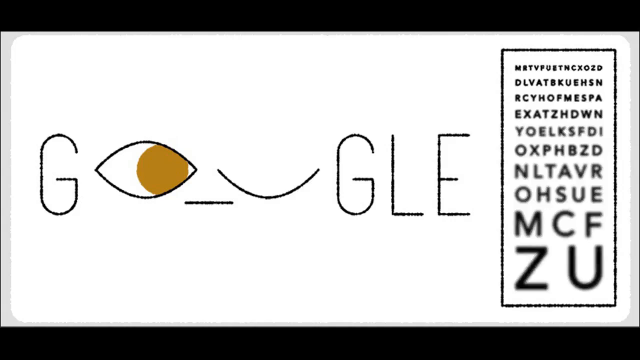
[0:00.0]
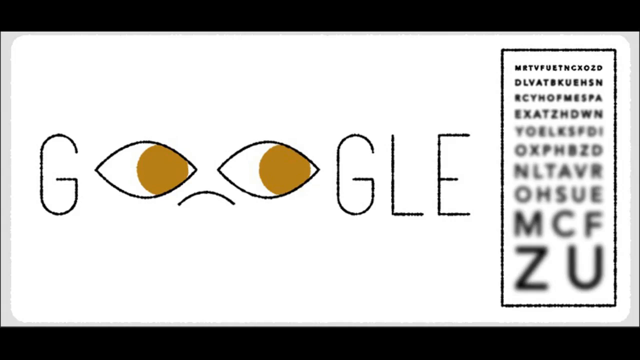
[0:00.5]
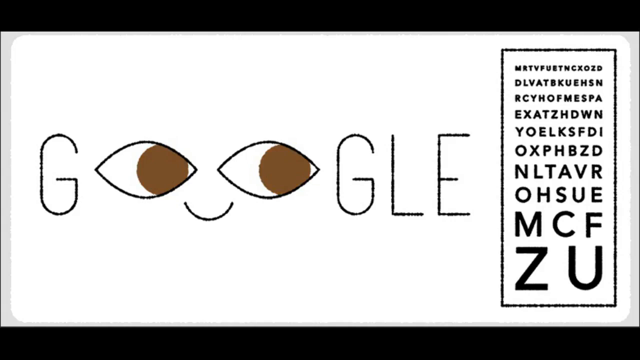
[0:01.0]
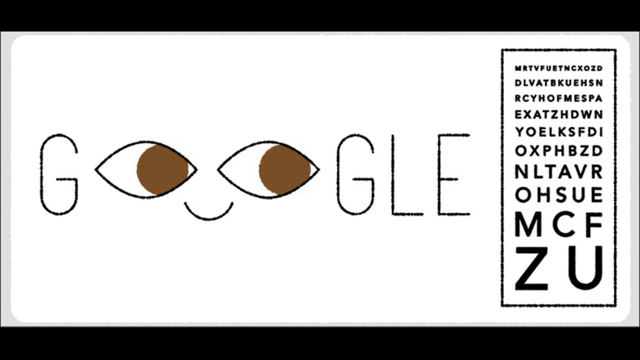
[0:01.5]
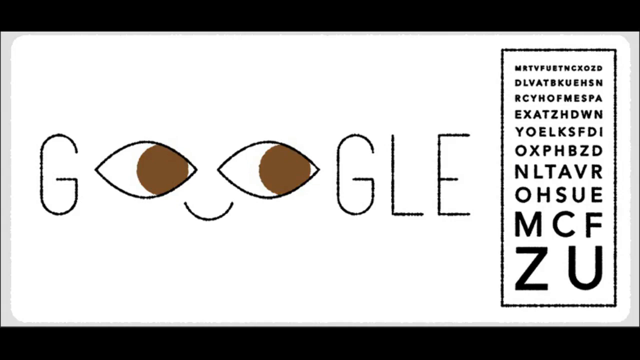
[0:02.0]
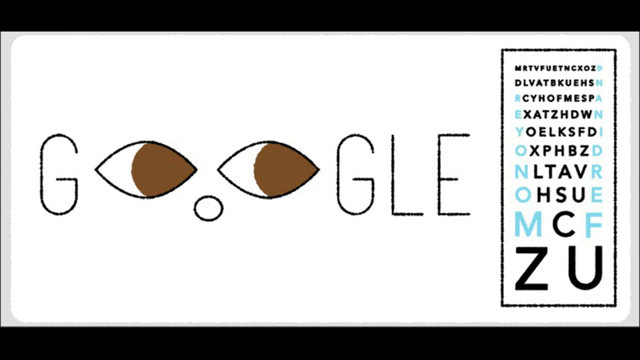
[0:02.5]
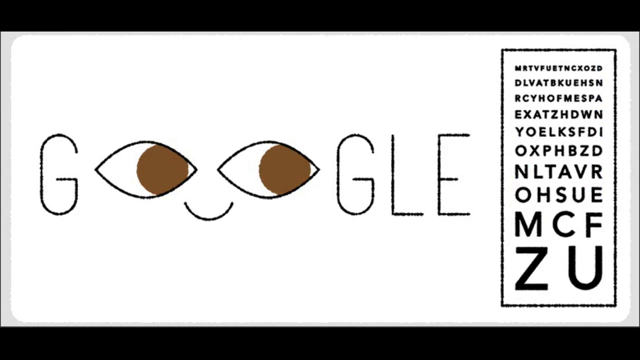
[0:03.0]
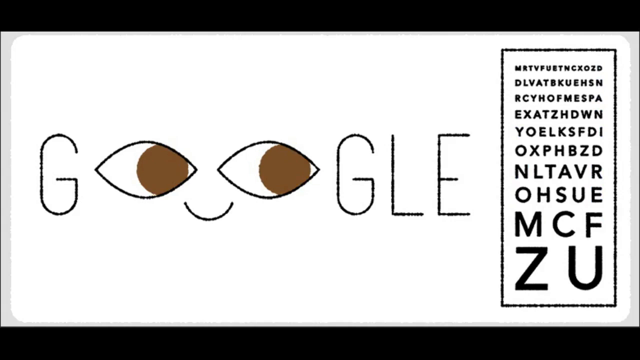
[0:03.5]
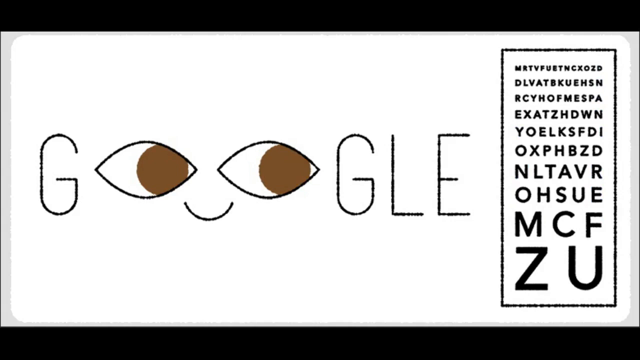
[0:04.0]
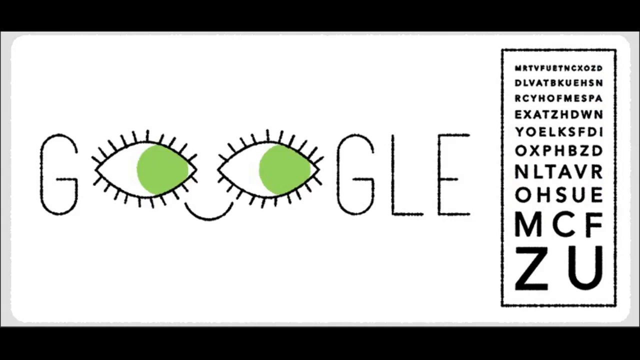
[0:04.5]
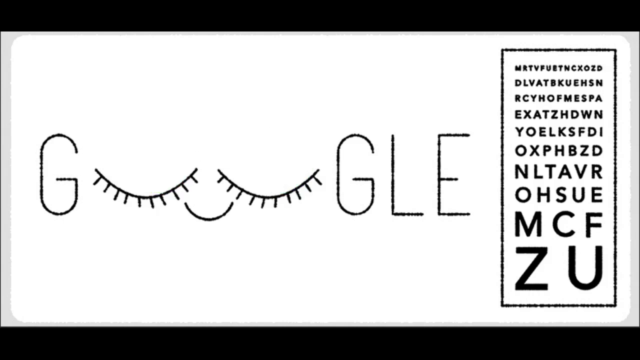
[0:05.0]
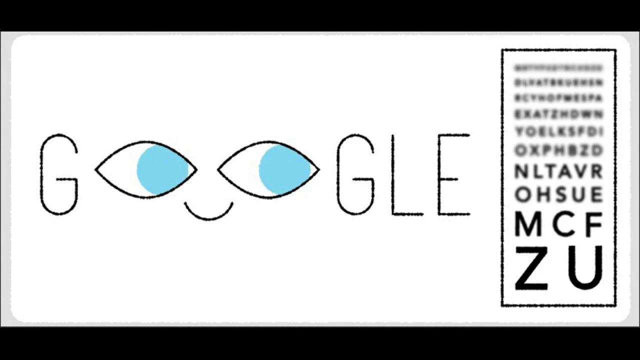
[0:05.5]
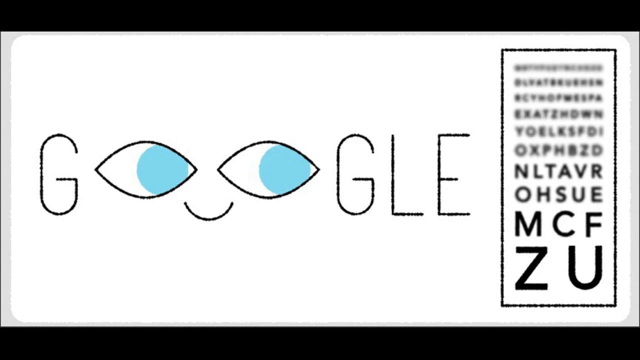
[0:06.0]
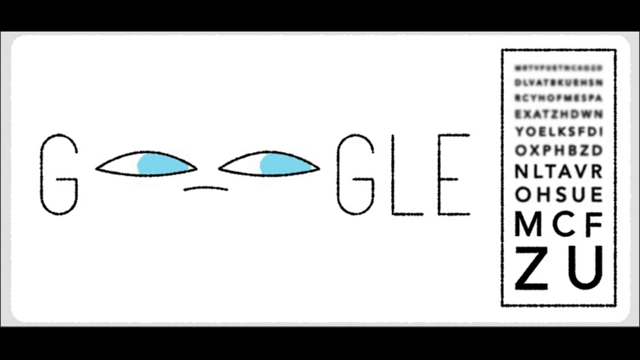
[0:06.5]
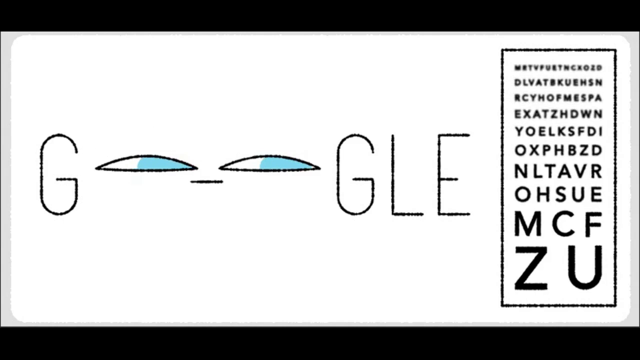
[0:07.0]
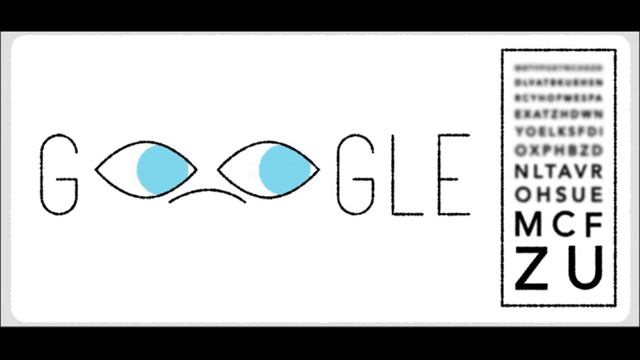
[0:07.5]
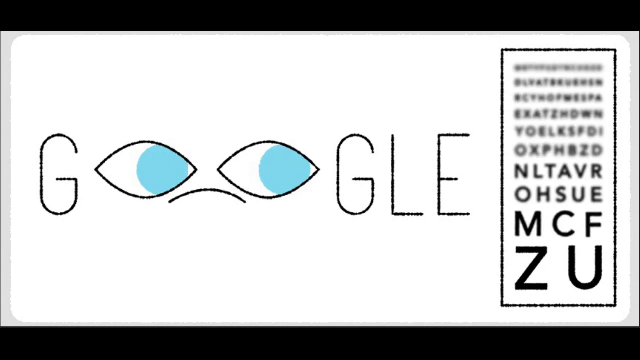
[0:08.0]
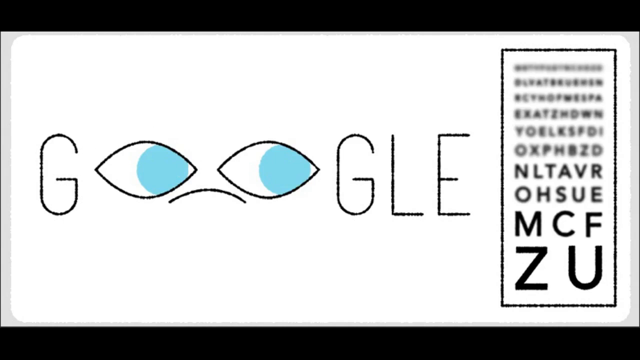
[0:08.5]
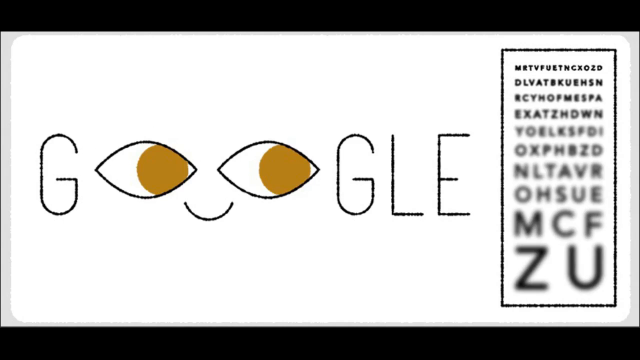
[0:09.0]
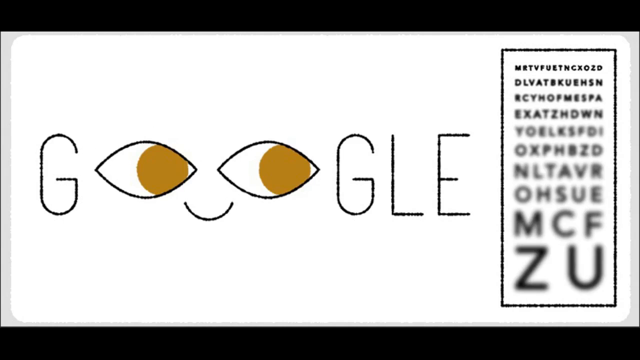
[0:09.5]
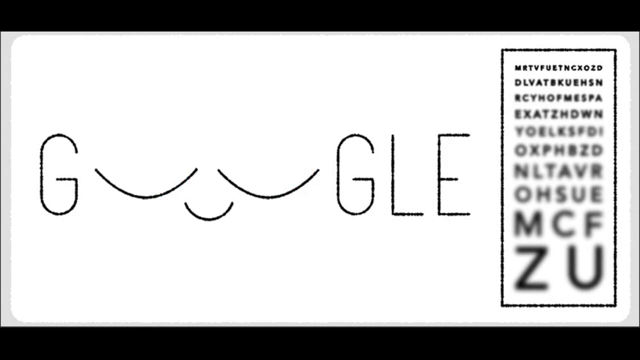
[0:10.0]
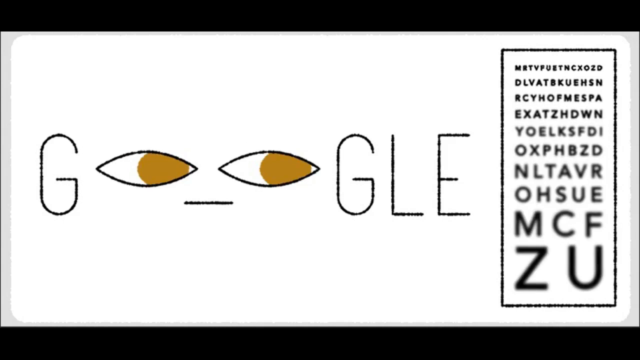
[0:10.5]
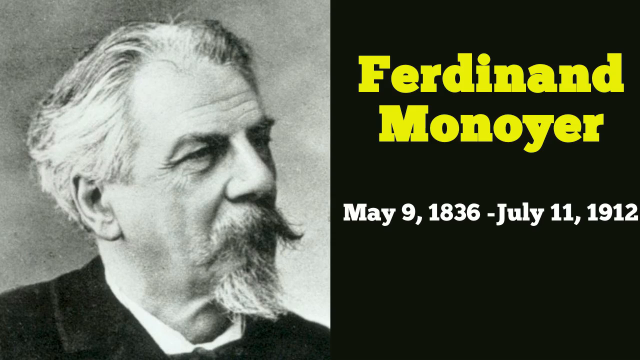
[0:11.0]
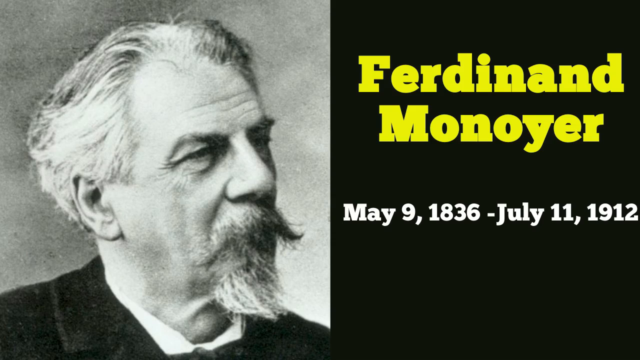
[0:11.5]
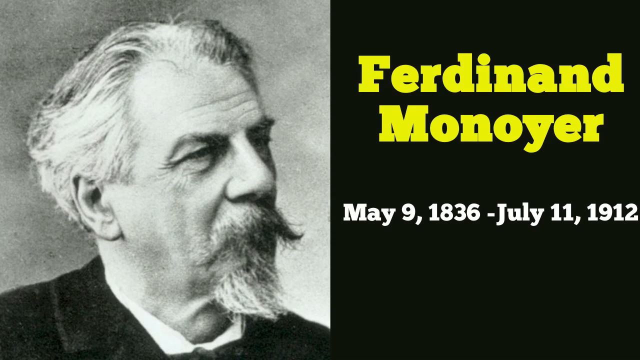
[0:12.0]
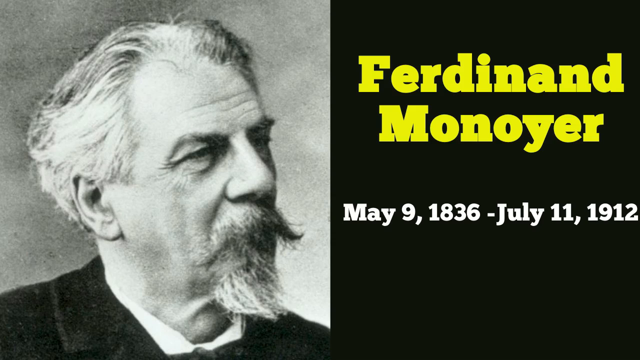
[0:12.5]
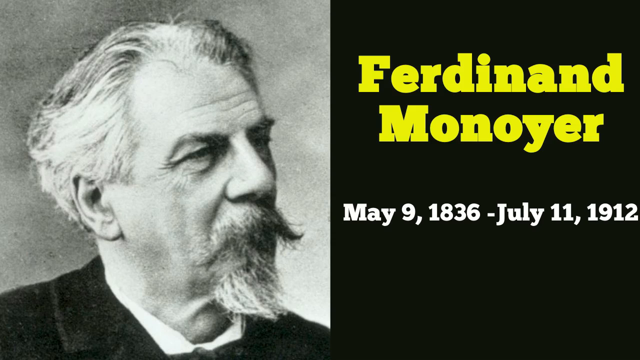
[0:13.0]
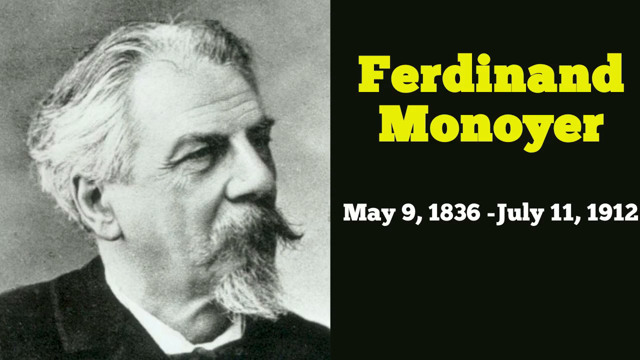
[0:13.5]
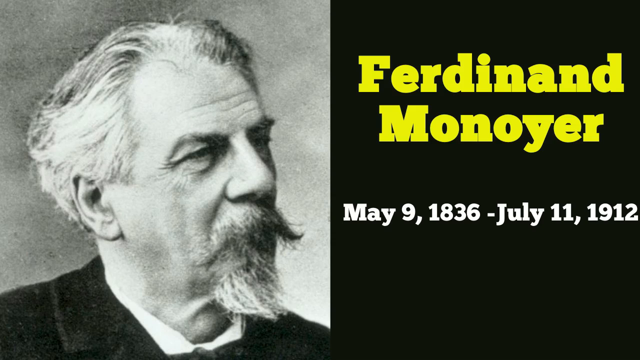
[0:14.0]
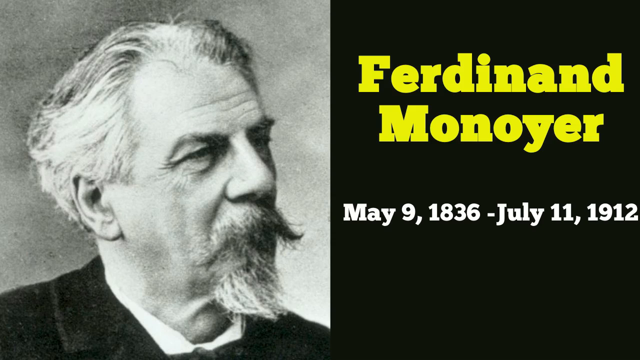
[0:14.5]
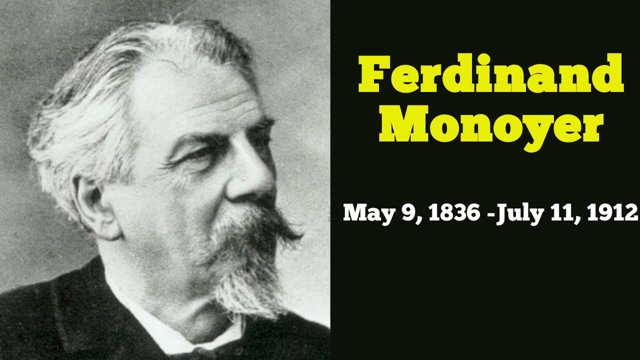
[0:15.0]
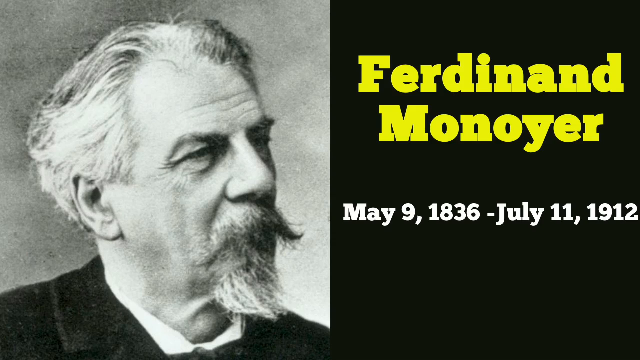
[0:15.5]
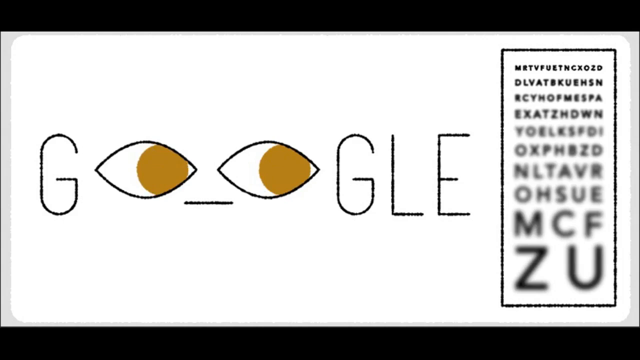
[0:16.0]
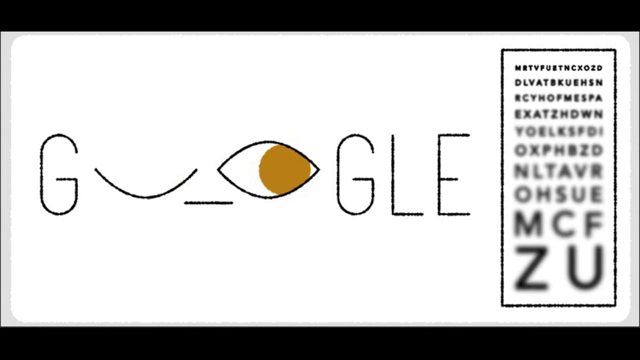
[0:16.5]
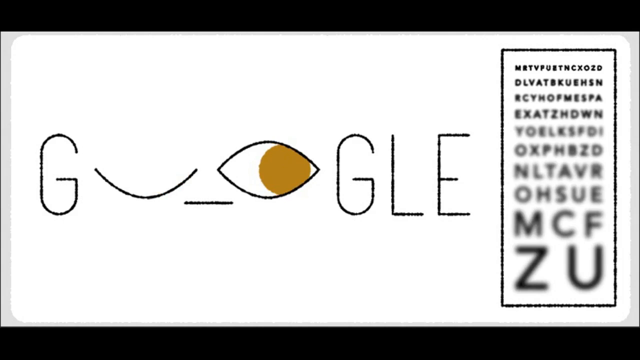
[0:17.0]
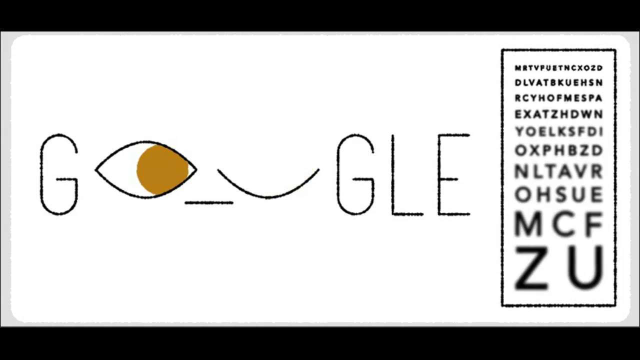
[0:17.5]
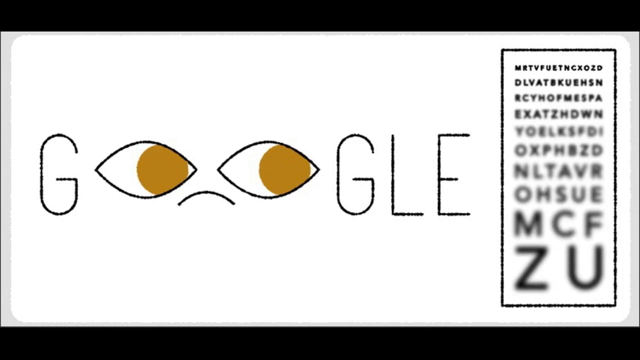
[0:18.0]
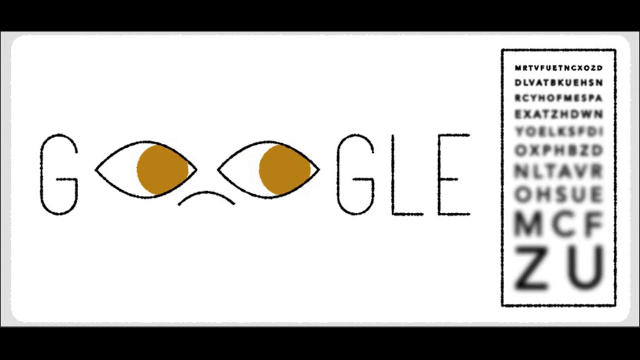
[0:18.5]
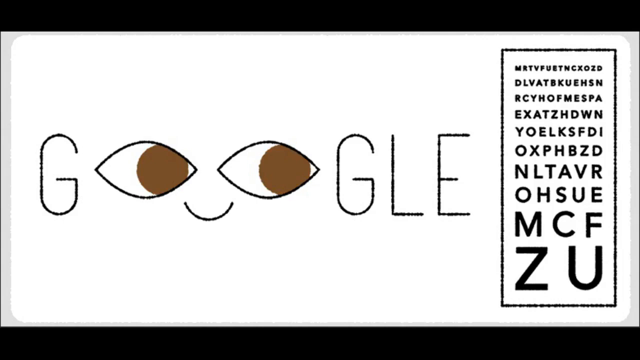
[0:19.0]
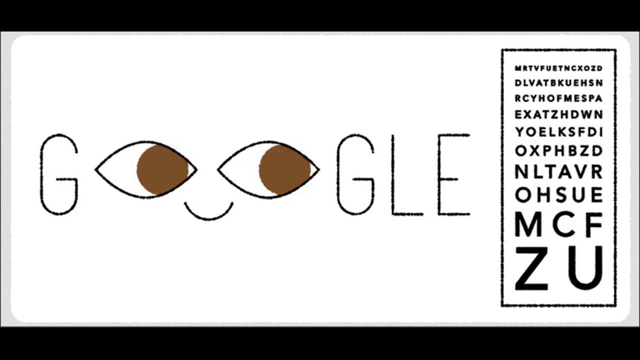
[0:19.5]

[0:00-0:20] The video appears to be both for Google and for an eye doctor. On the left middle side of the screen is the word Google, with the first O shown as a hazel iris. Beneath it is a dash, and the other eye is a curved line, as if it were a blinking eye. On the far right side is what looks like an eye chart: the letters are smaller toward the top, blurry in the middle, and get a bit bigger while staying blurry, ending with two large letters in bold lettering. Next, two hazel eyes appear within the O's of Google and the dash turns into a smile. The little face in the word keeps making expressions. It looks shocked, then turns to green eyes with long eyelashes, like a lady's. Then come blue eyes looking coyly to the right side of the screen. The eyes become almost closed, as if in disbelief, then get big again: big blue eyes looking to the side with a little frowny face, though no tears are visible. The hazel eyes then appear smiling, then both eyes close as if asleep. The eyes open, blink, and cut to the side, and the mouth becomes just a dash, as if feeling blah. The scene then changes to a black-and-white picture of an older gentleman on the left side of the screen, with gray hair and a bushy gray mustache. On the right side appear the name Ferdinand Monoyer and the dates May 9, 1836 through July 11, 1912. Finally, the Google eyes appear again.